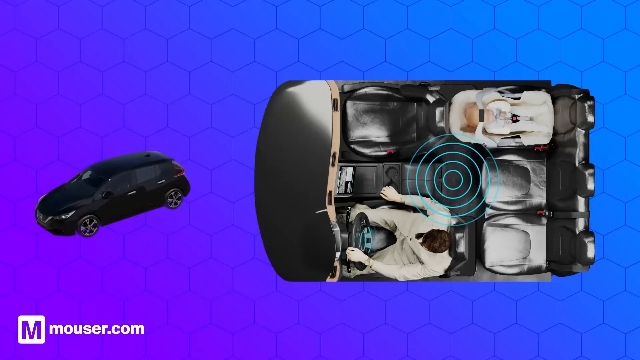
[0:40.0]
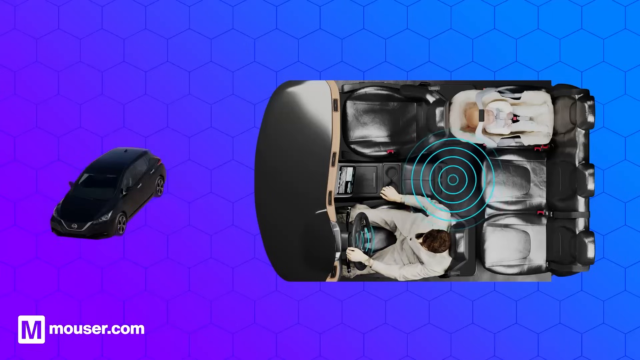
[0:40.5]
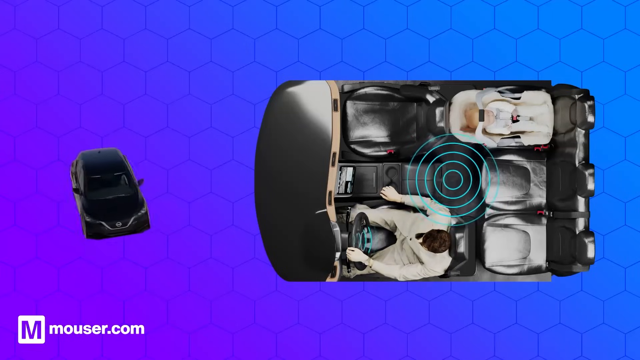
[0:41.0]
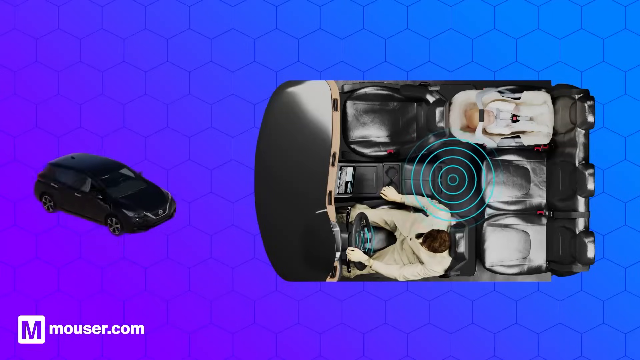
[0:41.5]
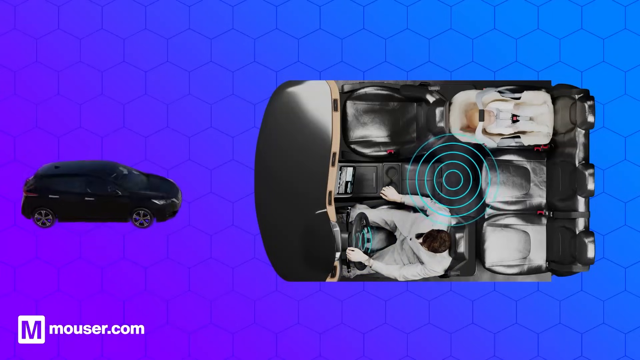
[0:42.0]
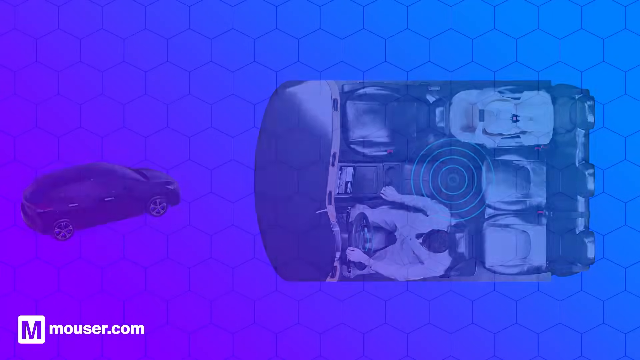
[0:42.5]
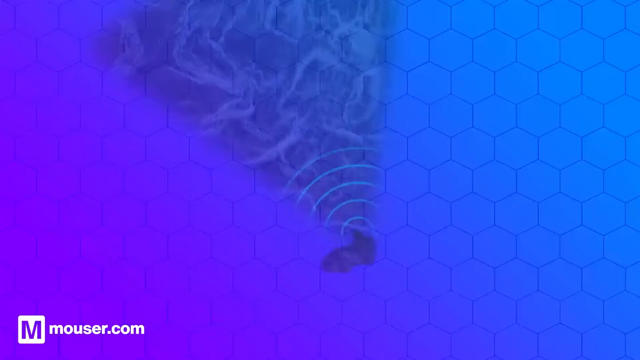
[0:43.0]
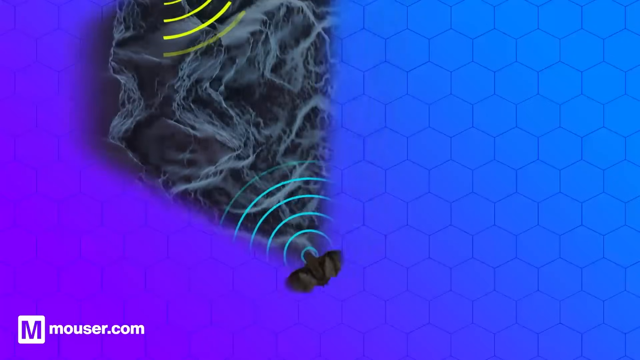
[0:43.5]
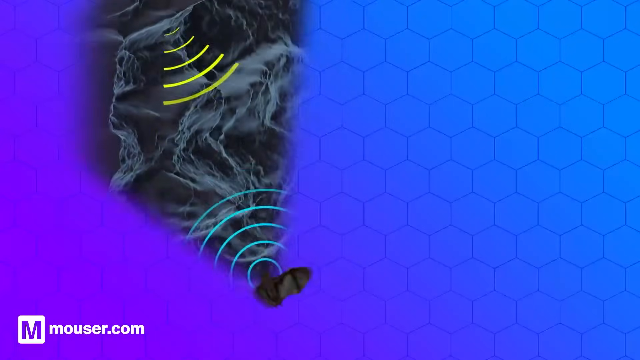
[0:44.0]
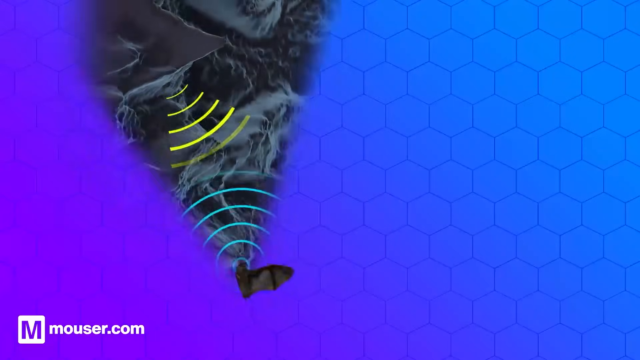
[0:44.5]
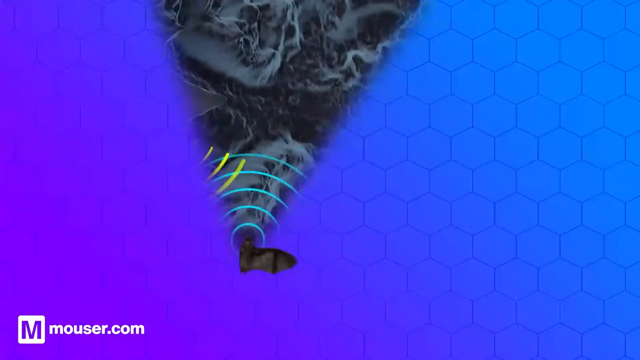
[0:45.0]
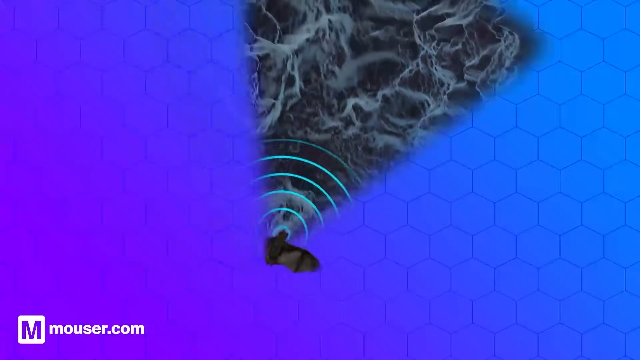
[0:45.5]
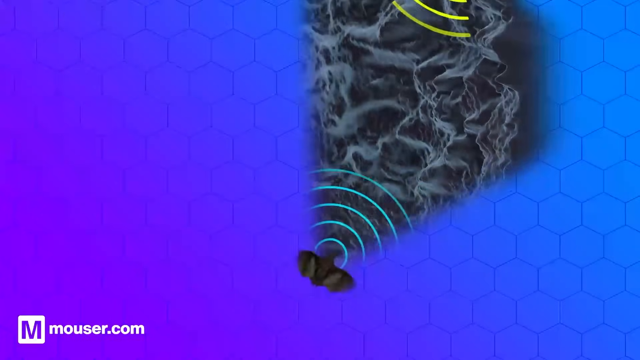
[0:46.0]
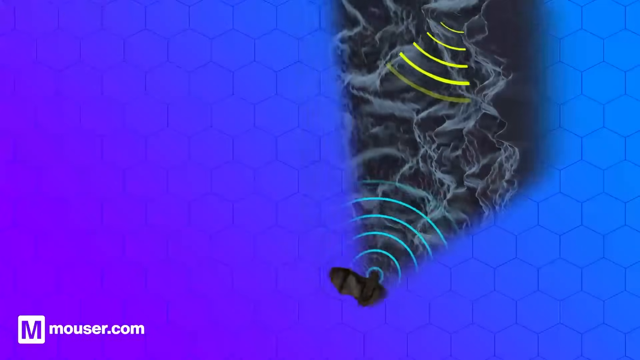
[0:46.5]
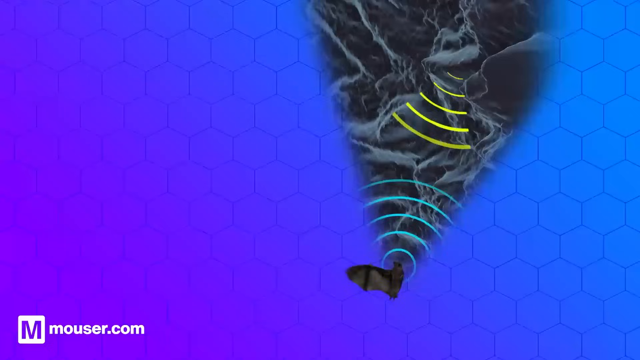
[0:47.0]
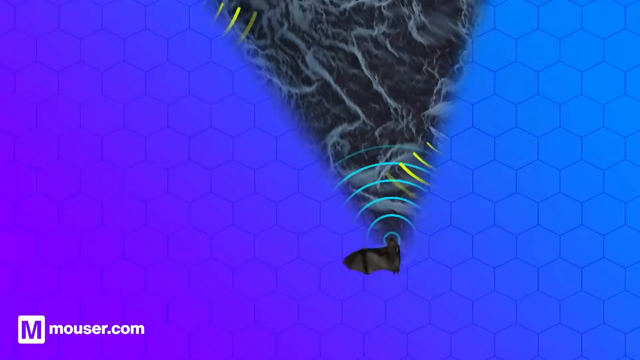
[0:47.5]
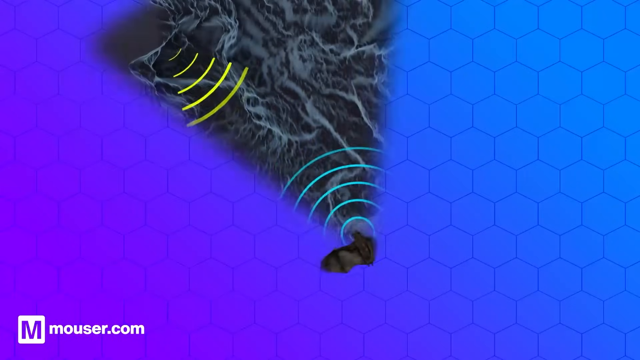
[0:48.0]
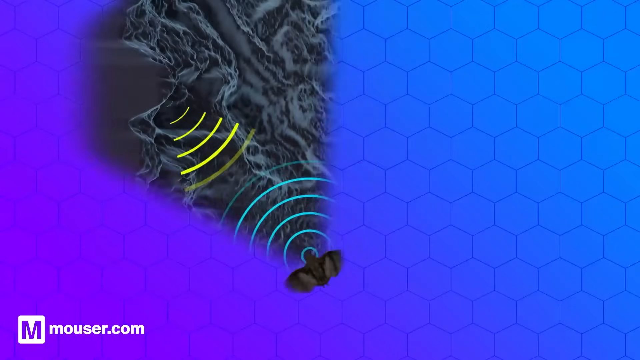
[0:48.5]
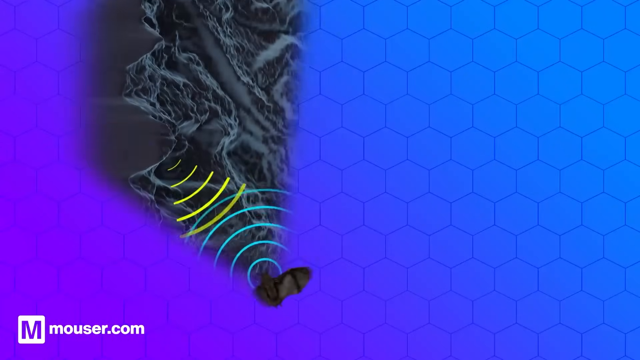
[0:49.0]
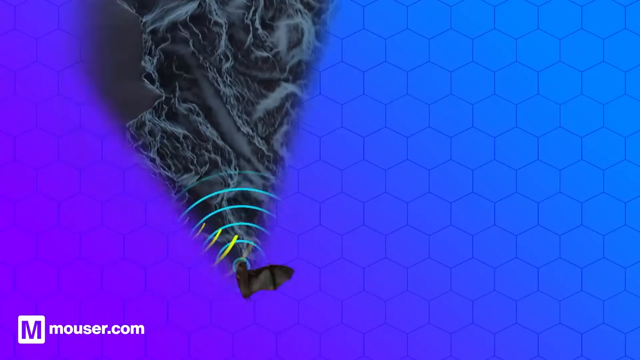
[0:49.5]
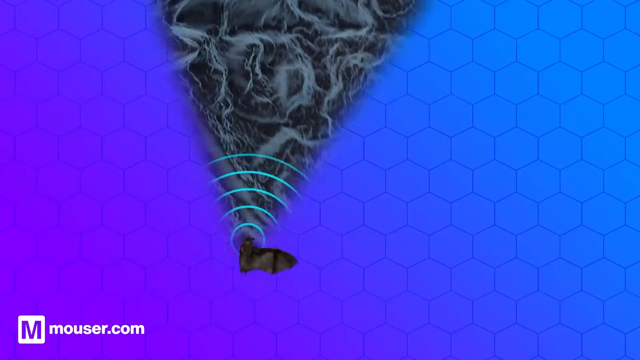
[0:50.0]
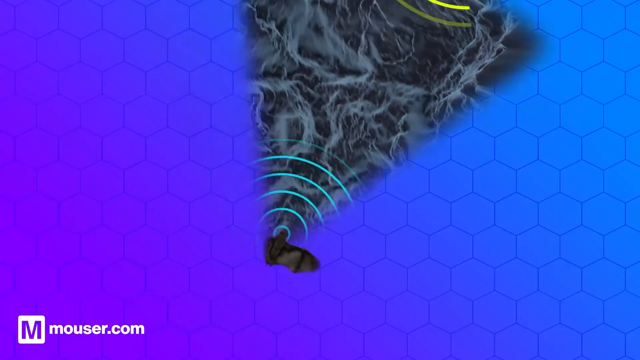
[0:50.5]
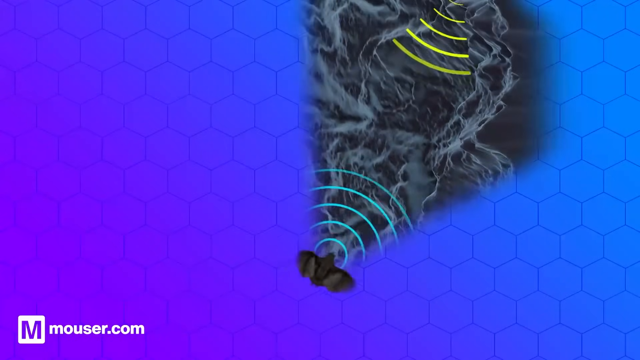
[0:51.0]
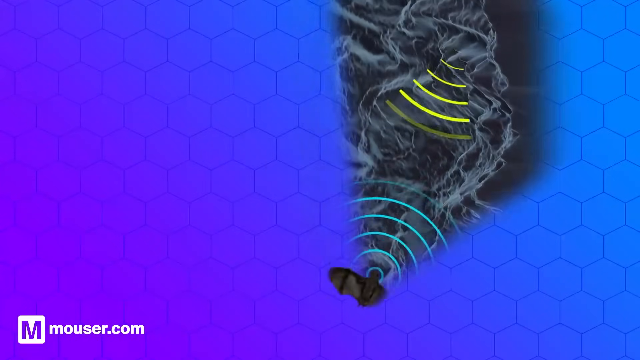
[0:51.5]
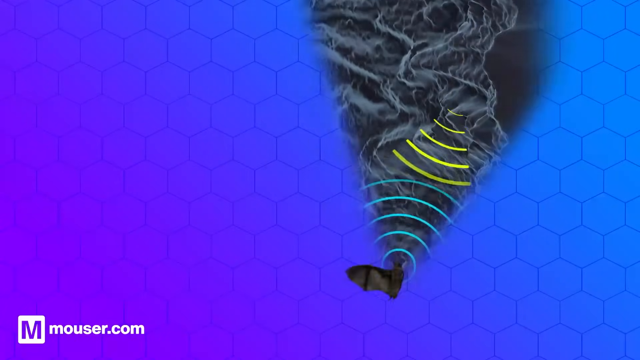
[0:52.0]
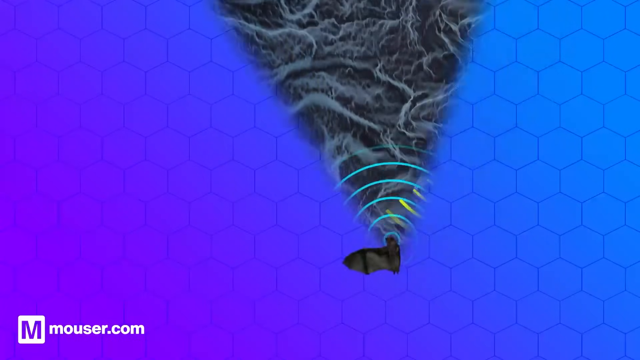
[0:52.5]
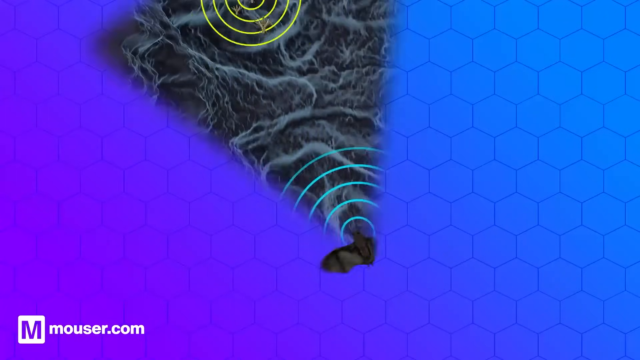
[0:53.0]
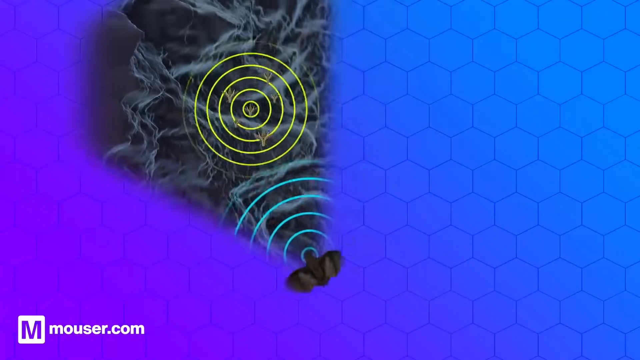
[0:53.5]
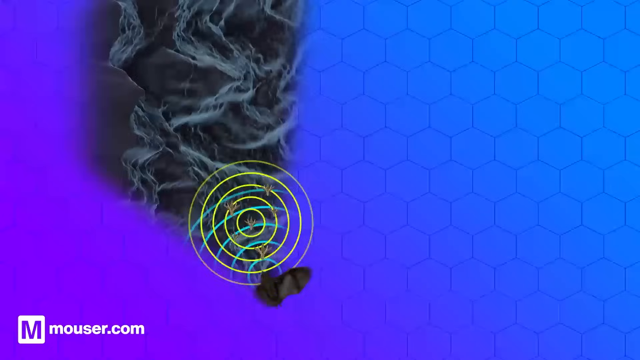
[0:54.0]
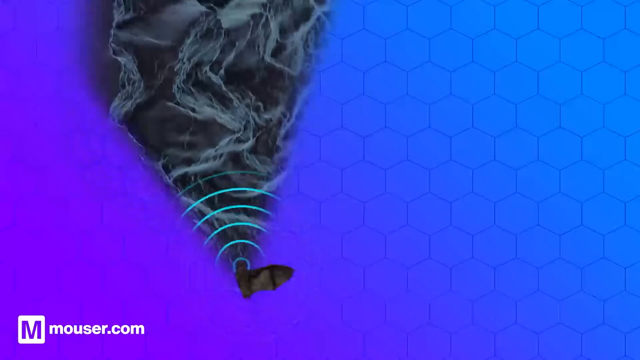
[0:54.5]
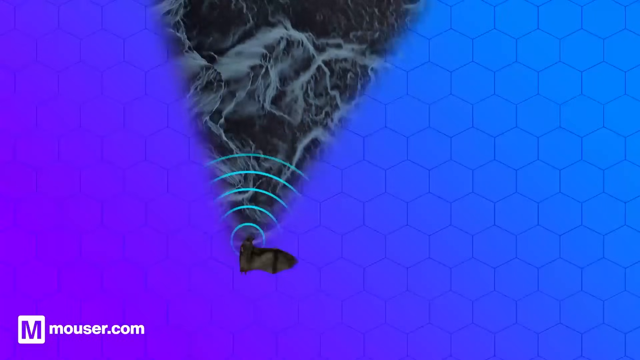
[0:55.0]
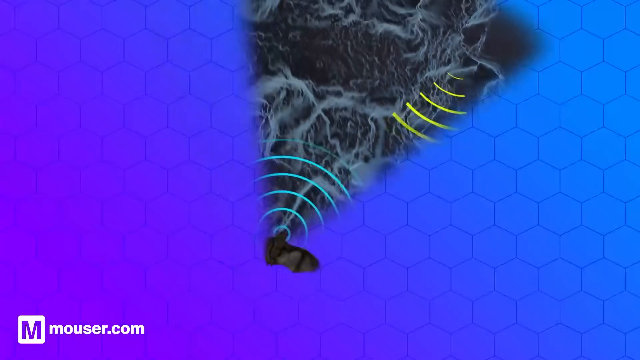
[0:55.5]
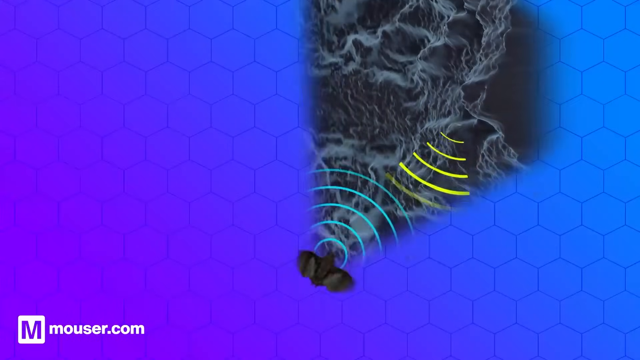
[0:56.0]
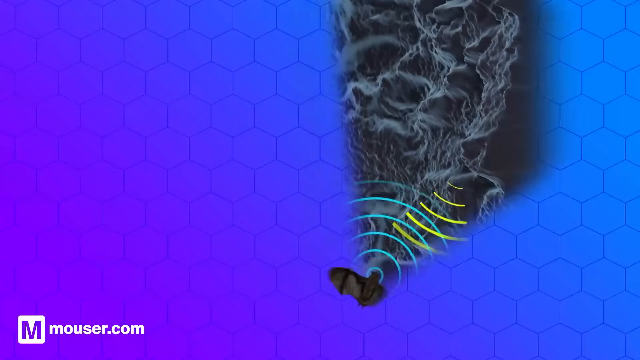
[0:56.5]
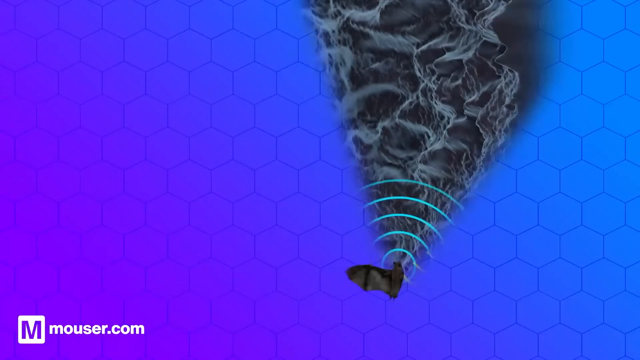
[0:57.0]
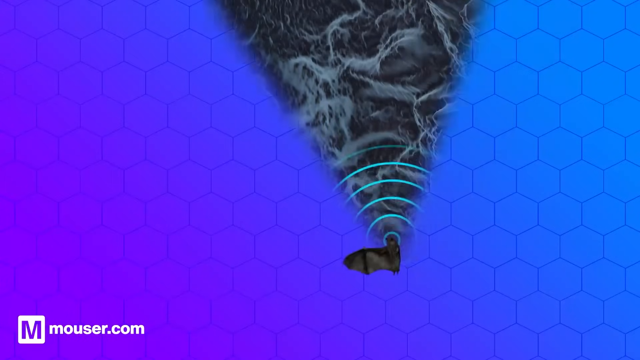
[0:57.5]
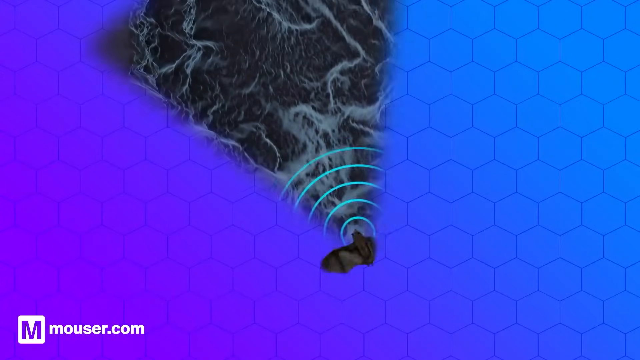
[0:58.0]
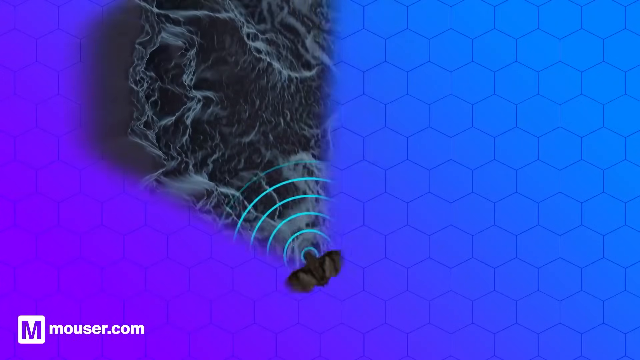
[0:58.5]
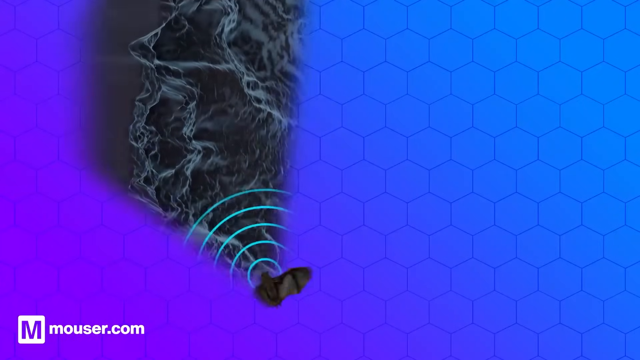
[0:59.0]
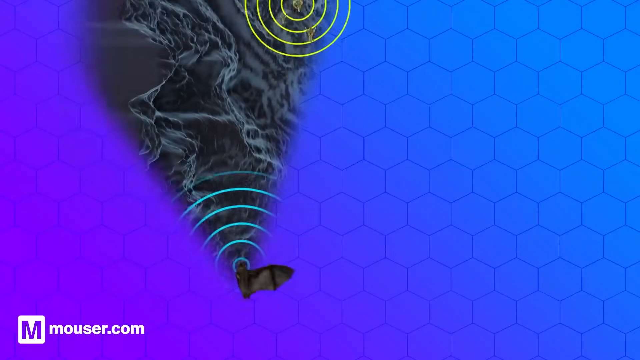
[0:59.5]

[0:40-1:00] The blue background with a honeycomb pattern continues. On the left-hand side of the screen, a small black car appears to be rotating, and on the right-hand side is a larger top-angle view of the inside of the car, where a white crash test dummy or human-like figure appears to be sitting in the driver's seat. A green signal appears to be emanating from the car, and the car on the left spins around. The scene then cuts to a screen showing a signal being sent by a black bird, with some smoky-like substance appearing to come out of the signal as it pans from right to left. The bird flies around the screen. "mouser.com" is written in white in the lower left-hand corner.